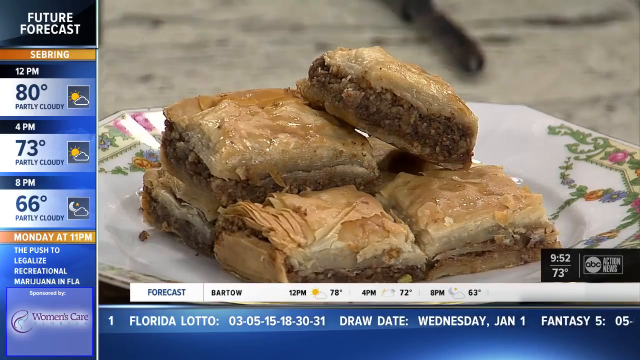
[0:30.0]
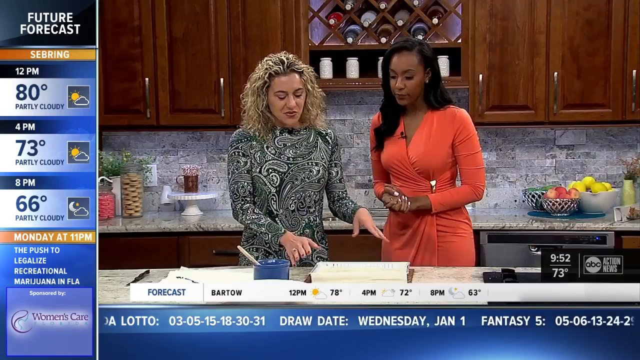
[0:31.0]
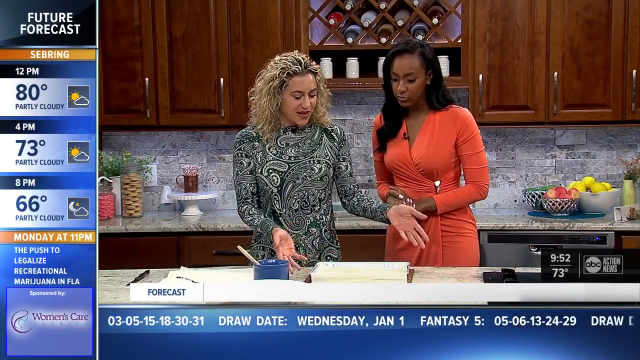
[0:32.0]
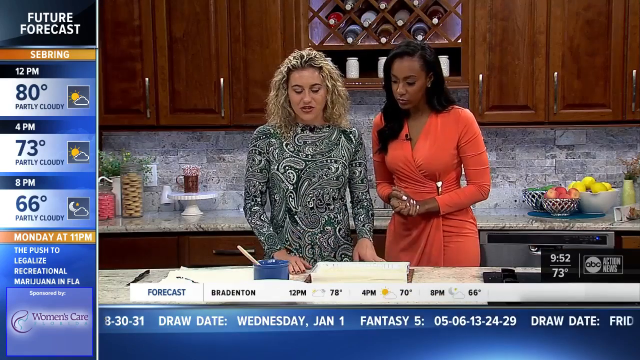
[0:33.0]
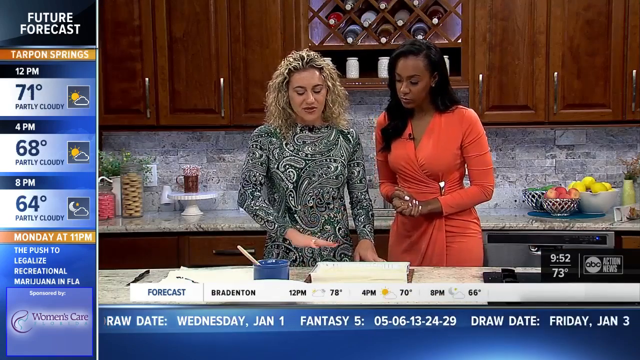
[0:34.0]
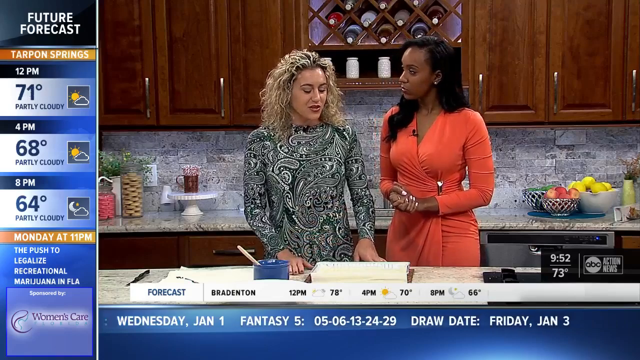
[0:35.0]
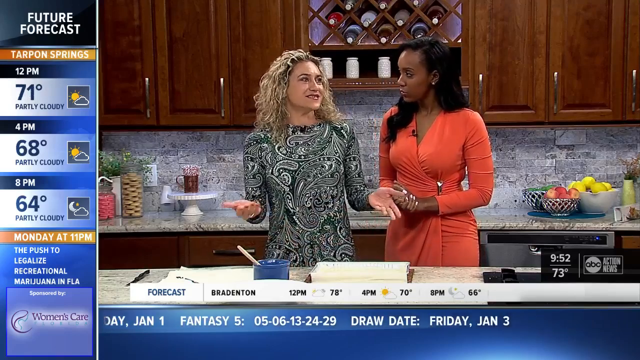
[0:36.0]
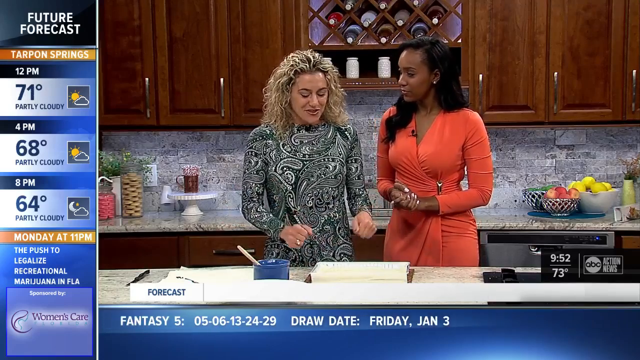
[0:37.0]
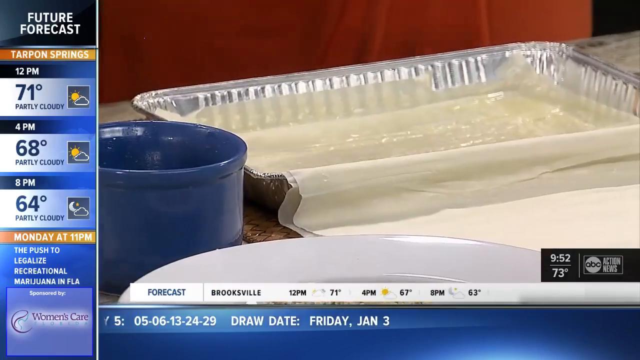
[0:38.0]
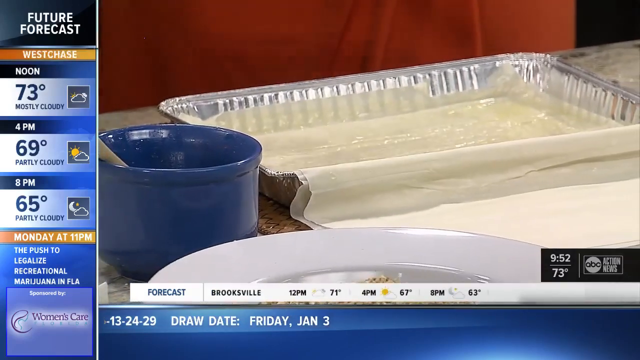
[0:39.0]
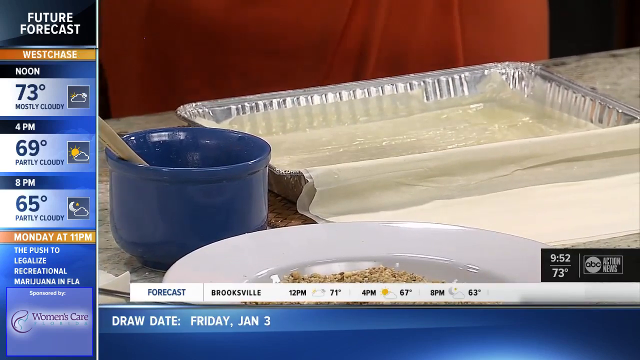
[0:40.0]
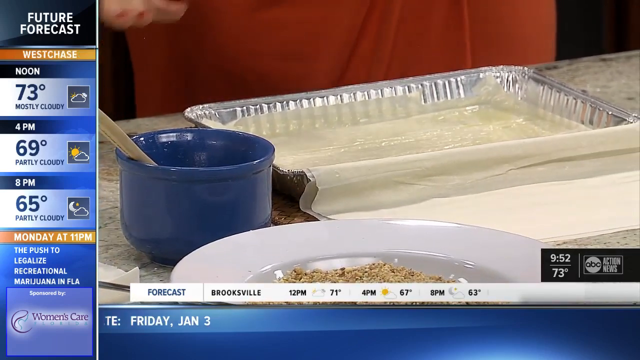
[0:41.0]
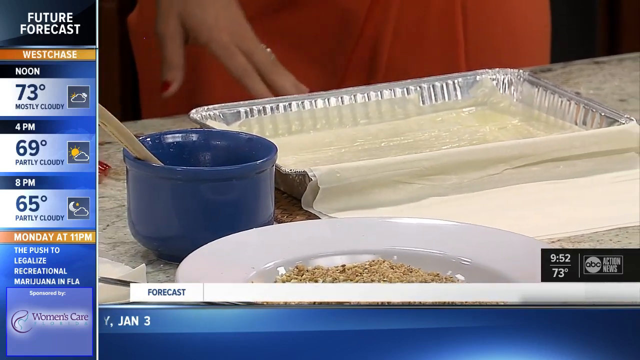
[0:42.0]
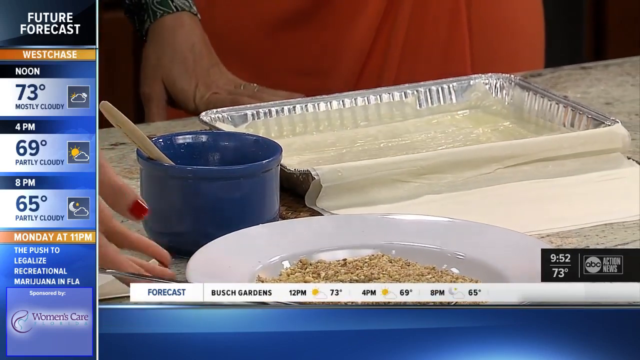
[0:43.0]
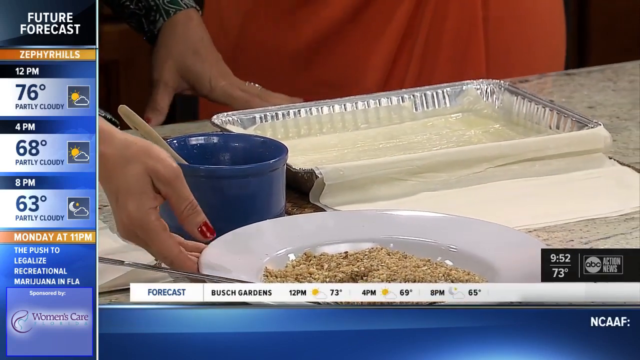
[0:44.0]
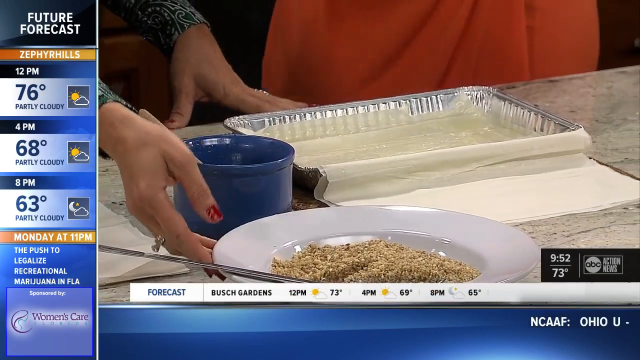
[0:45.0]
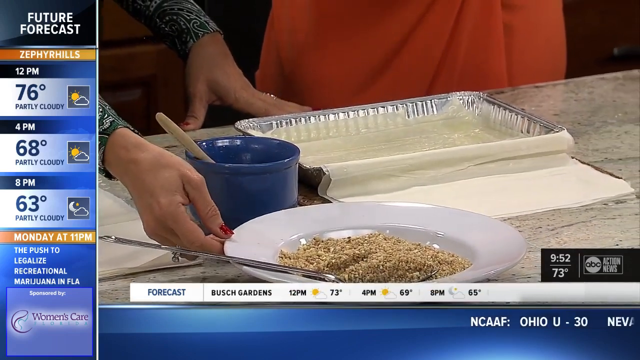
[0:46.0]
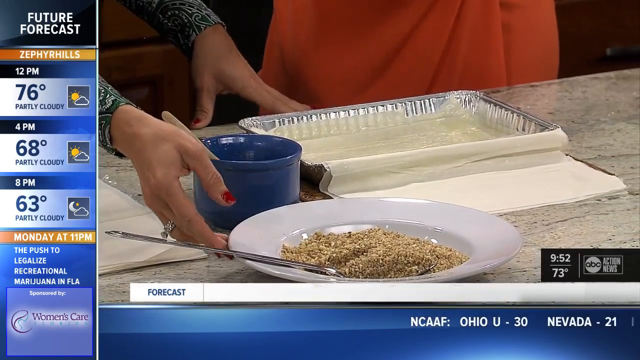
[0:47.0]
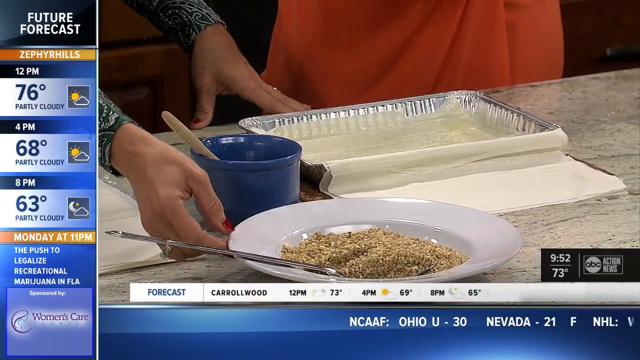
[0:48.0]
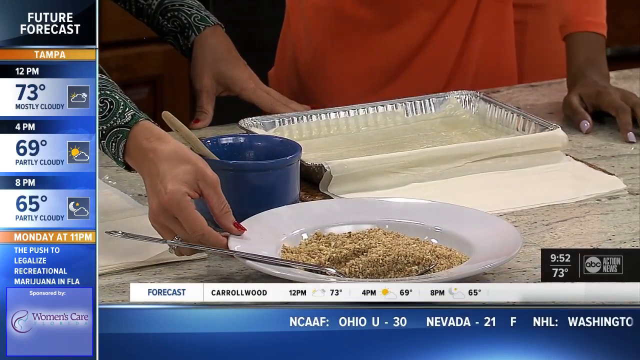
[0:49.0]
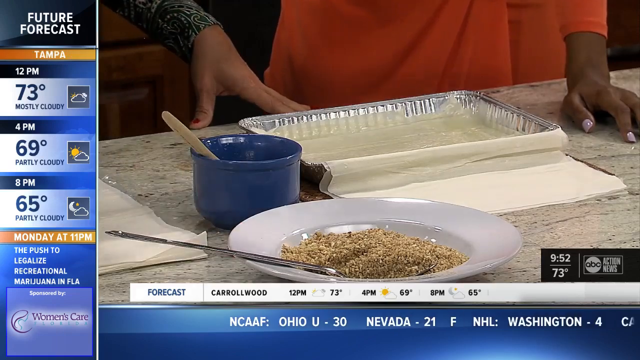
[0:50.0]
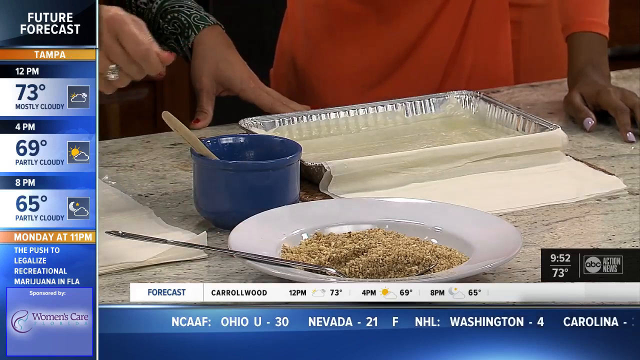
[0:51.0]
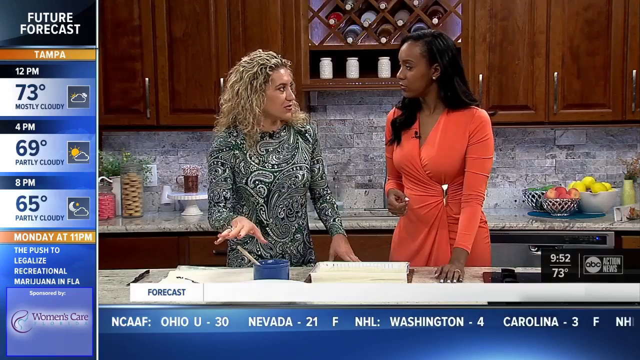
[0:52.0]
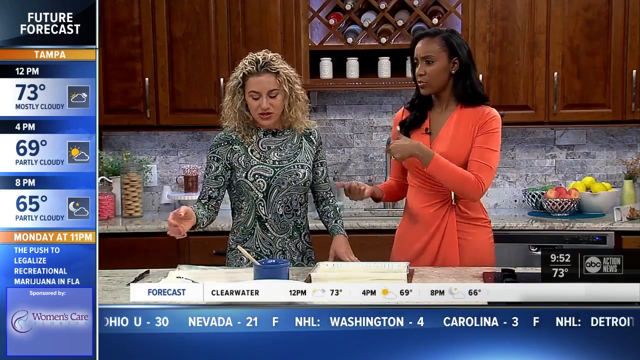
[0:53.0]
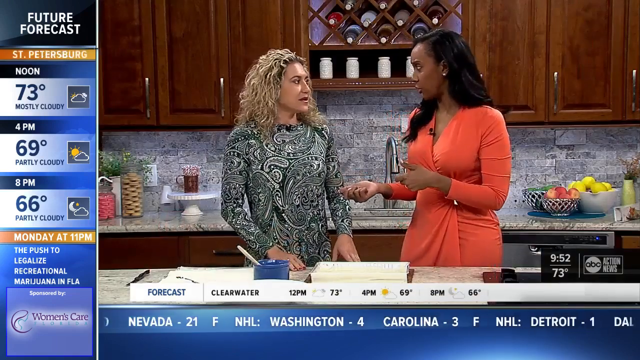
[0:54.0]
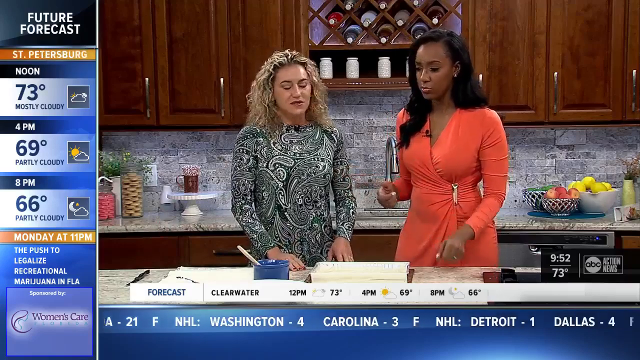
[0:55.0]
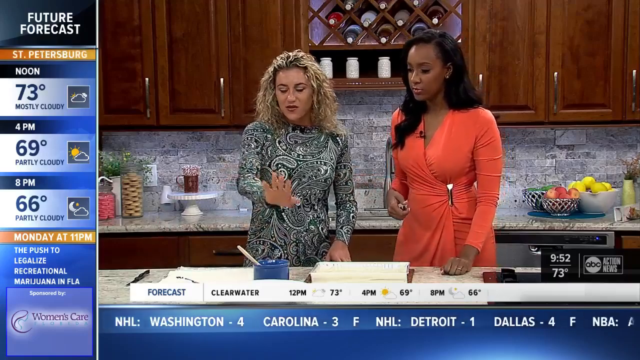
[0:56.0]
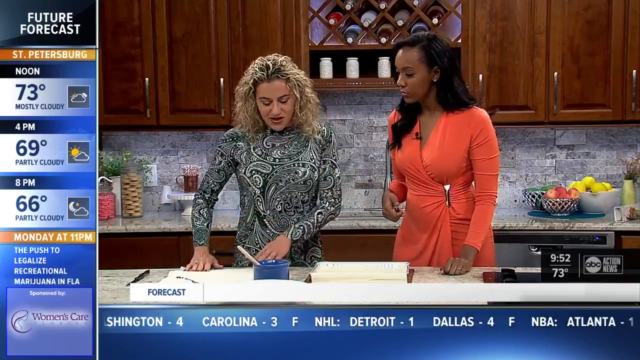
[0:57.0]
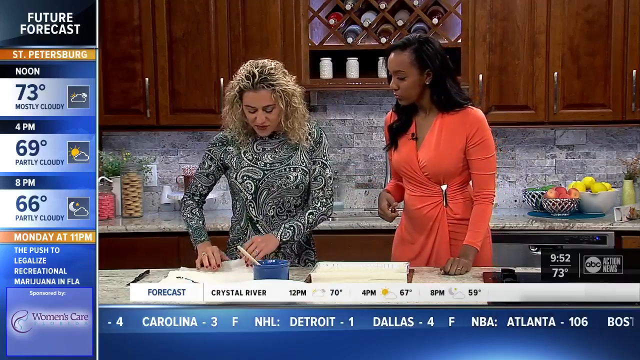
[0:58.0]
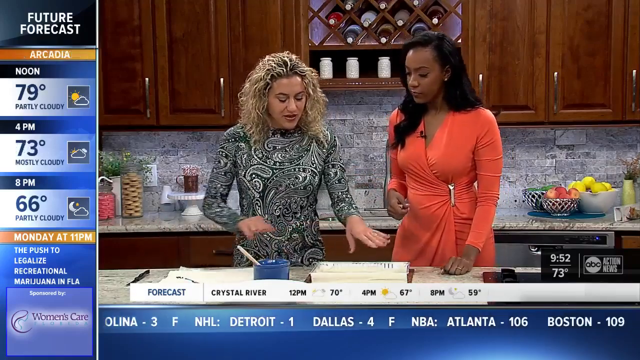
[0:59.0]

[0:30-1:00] Shots of a dessert appear; it looks like some type of layered turnover, somewhat like apple pie. It is cut into cubes and placed on a plate, nicely arranged and stacked on top of each other. The future forecast is on the upper left, reading Sebring: 12pm, 80 degrees, partly cloudy; 4pm, 73 degrees, partly cloudy; 8pm, 66 degrees, partly cloudy; followed by information about Monday at 11pm. The close-up of the dessert then gives way to the women speaking. A tin baking pan is on display with some ingredients set on the table; one looks like an oatmeal-like grain, possibly for the filling. A pastry sheet lines a tin pan.